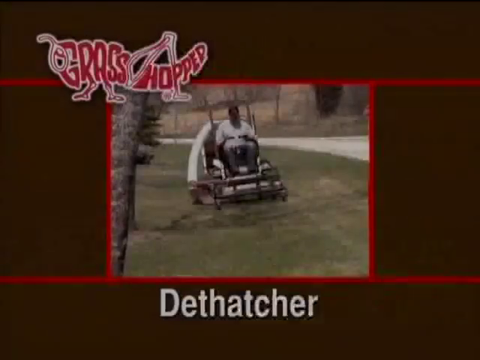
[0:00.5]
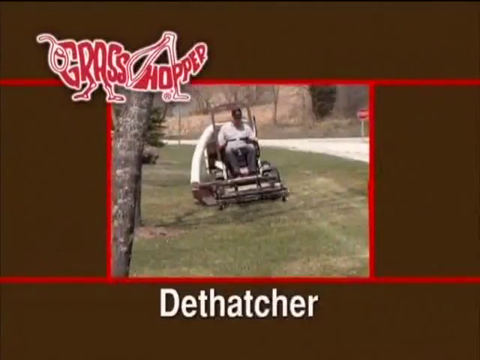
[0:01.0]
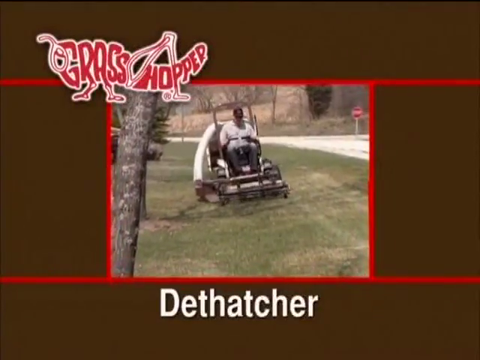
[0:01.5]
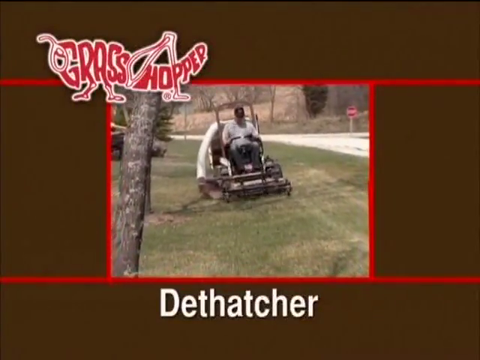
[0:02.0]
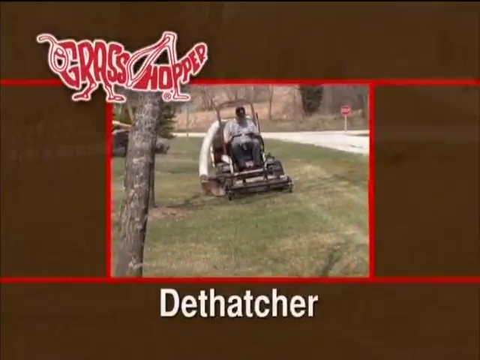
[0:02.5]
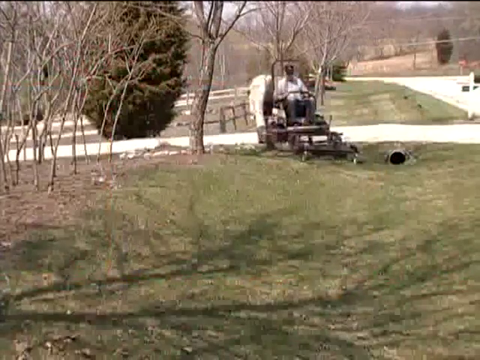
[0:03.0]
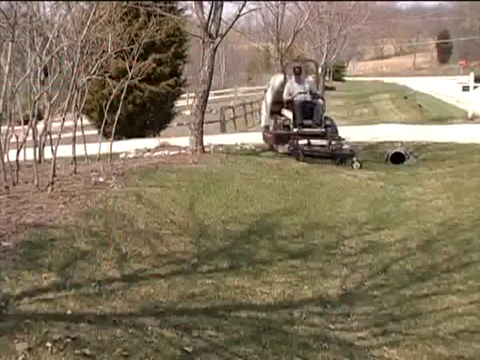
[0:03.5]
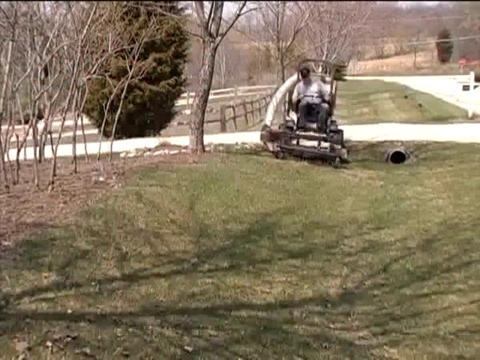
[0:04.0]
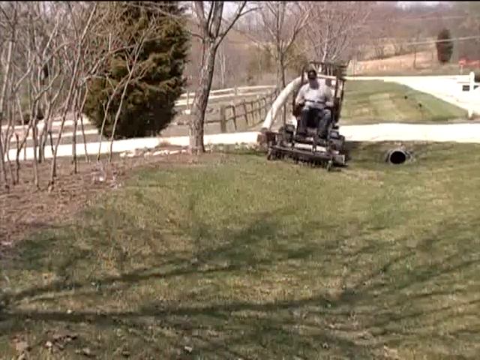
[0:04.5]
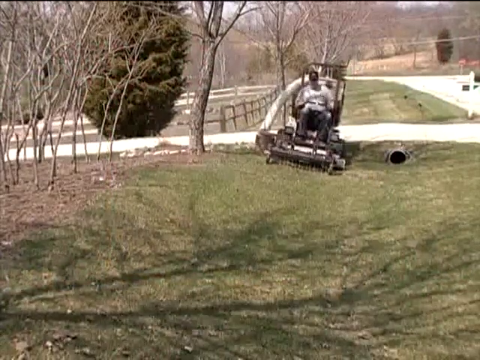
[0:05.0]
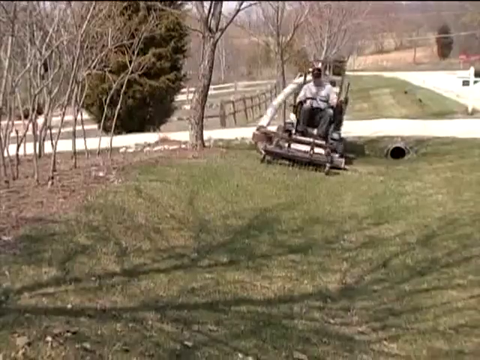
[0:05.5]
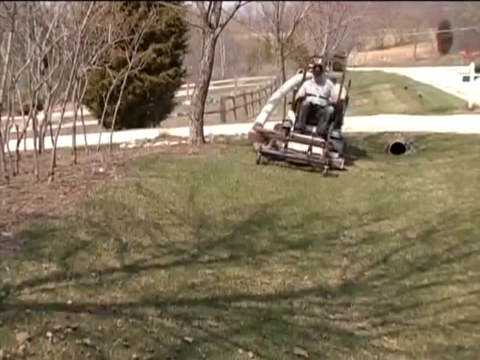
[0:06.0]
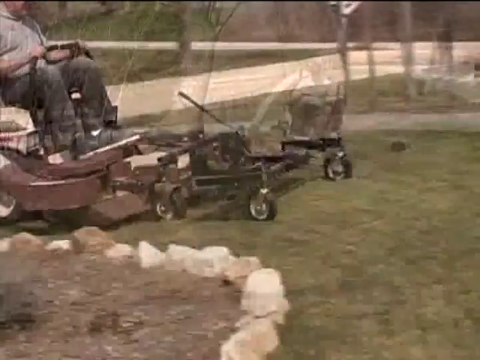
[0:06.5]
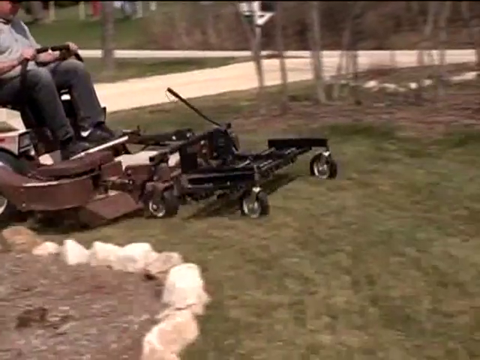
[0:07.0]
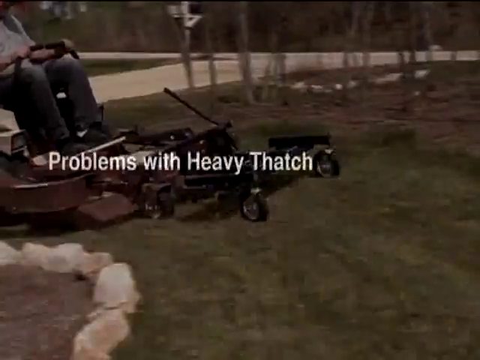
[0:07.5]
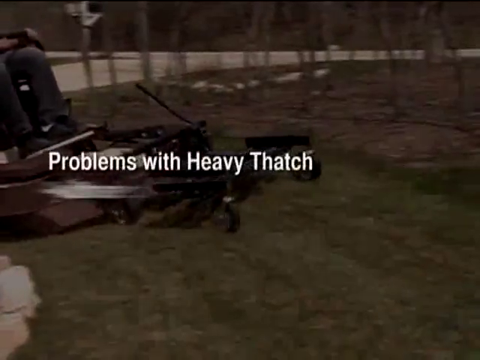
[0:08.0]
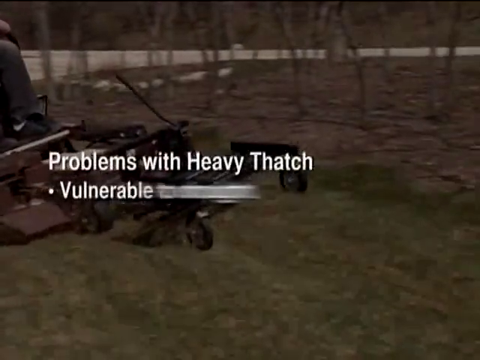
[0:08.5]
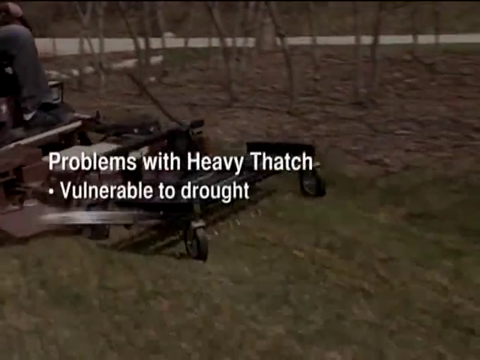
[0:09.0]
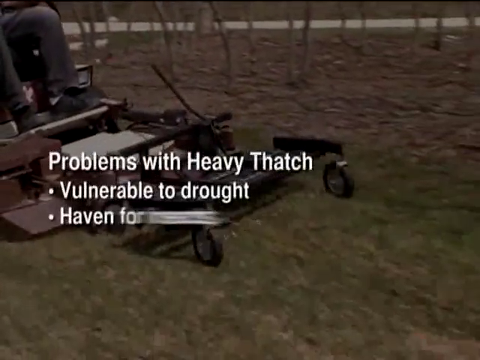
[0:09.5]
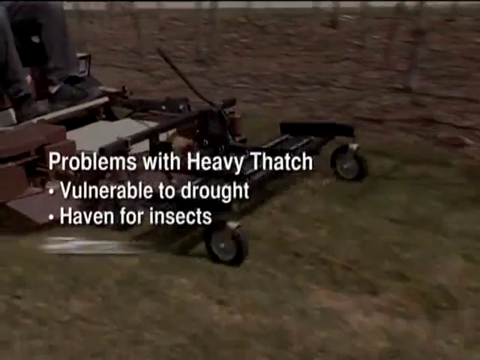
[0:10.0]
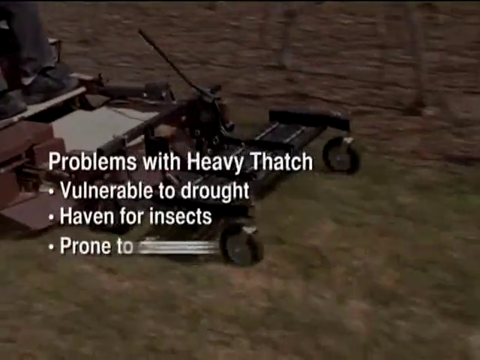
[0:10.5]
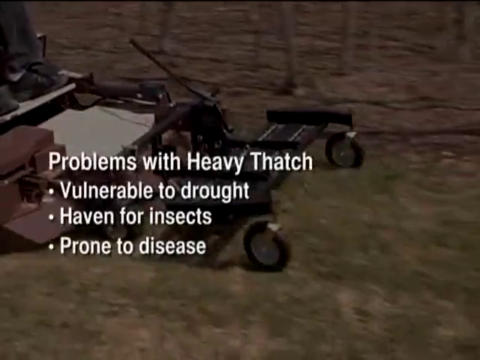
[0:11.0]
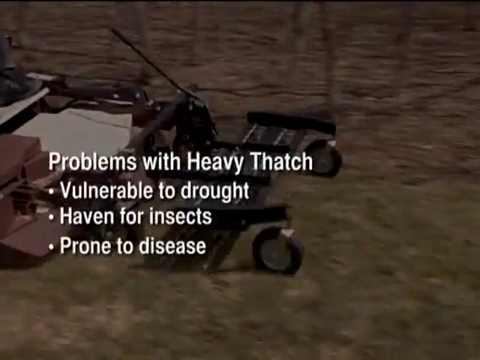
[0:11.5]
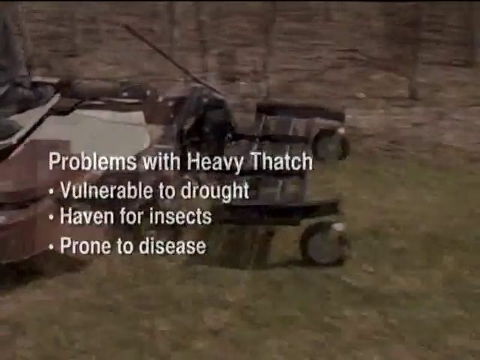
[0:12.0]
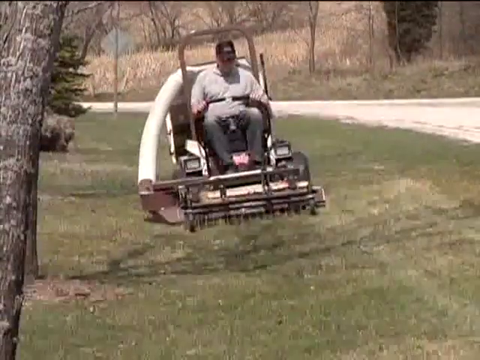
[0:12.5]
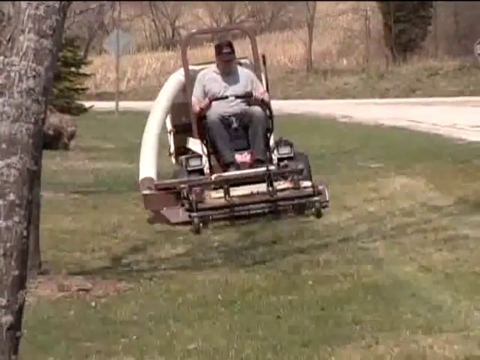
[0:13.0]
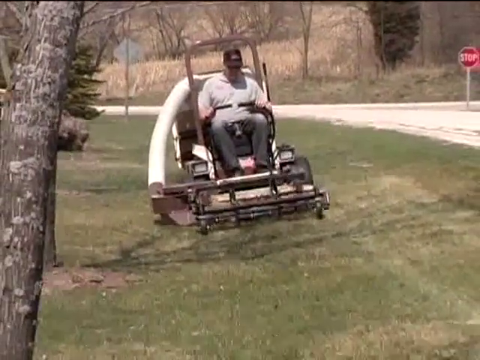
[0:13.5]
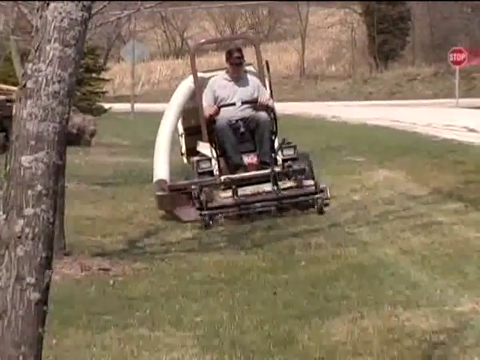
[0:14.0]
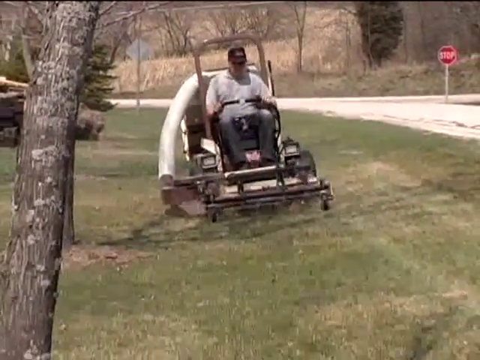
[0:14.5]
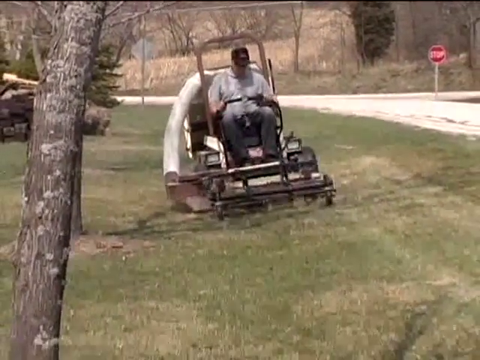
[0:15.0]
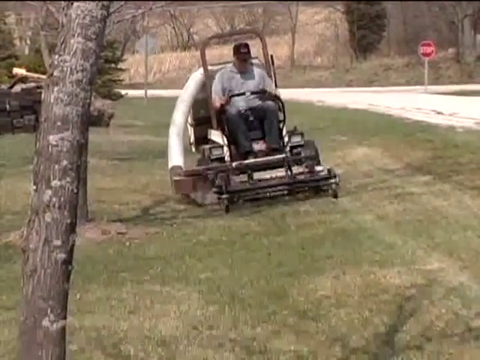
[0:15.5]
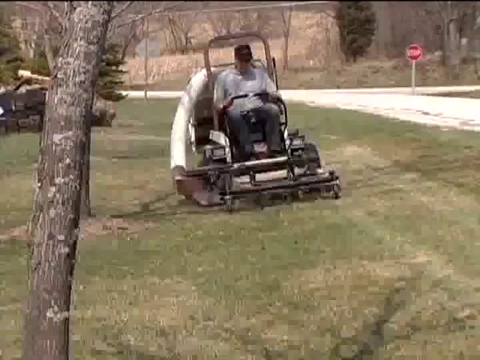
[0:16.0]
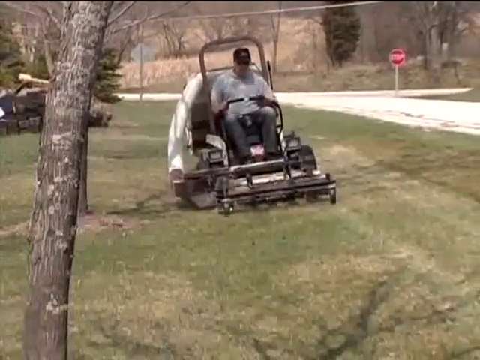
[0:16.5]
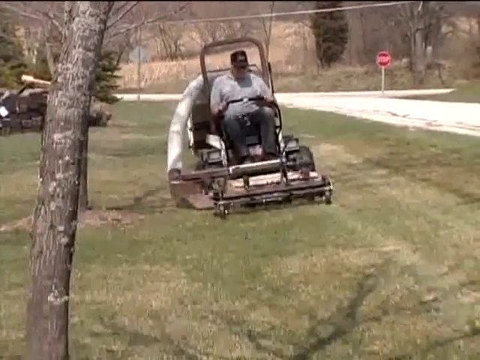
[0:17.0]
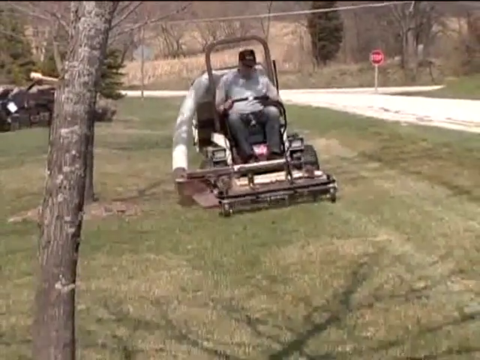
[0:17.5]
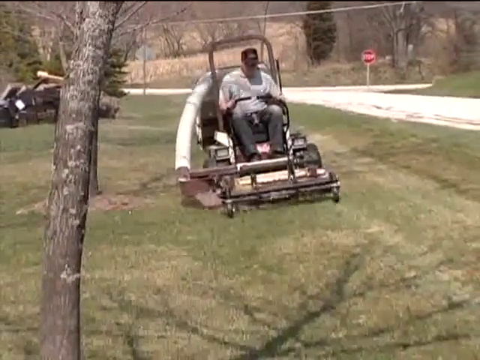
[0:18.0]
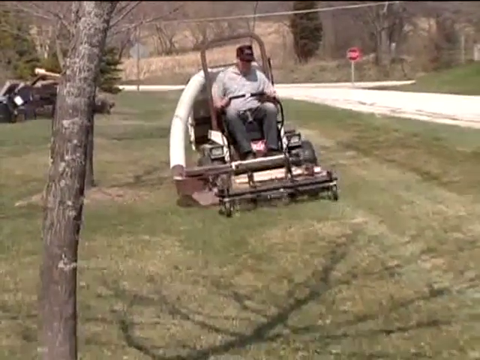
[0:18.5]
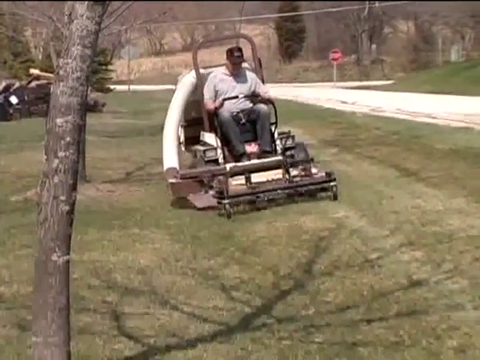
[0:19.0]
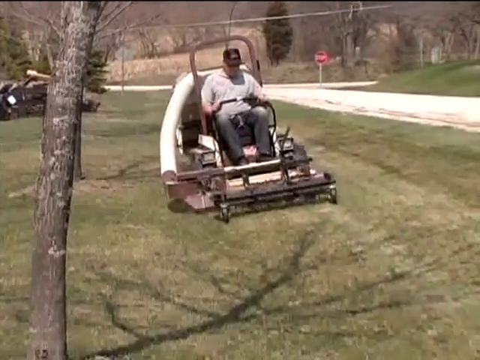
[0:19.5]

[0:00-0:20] Red text in the top left reads "Grasshopper"; its design includes a drawing shaped like a grasshopper, with the text forming the body of the grasshopper, which faces left. Below it, text reads "Dethatcher". In the middle, a person rides a lawn mowing machine, a vehicle used to mow the lawn; the video is low quality. Text reads "Problems with heavy thatch, vulnerable to drought, heaven for insects, prone to disease". The machine has no steering wheel, but pedals and handlebars that control it. The mowing part is mounted on the front and has two black wheels, while the main body of the machine has thick wheels that are also black. On the right of the machine there is a white object, like a pipe, that apparently collects the grass from the ground while the machine operates.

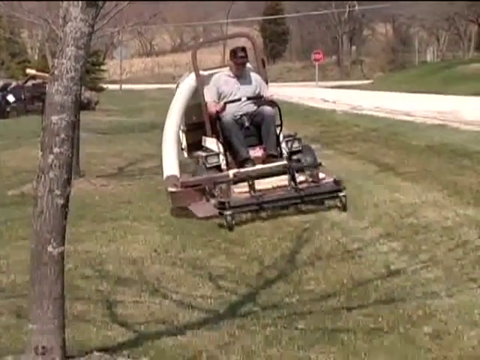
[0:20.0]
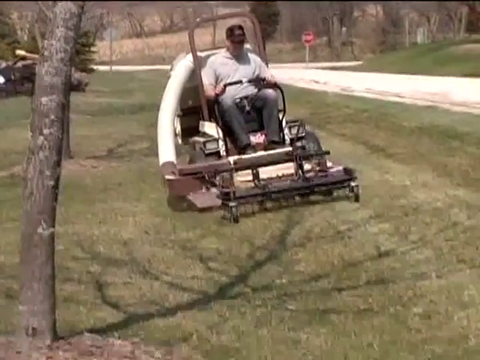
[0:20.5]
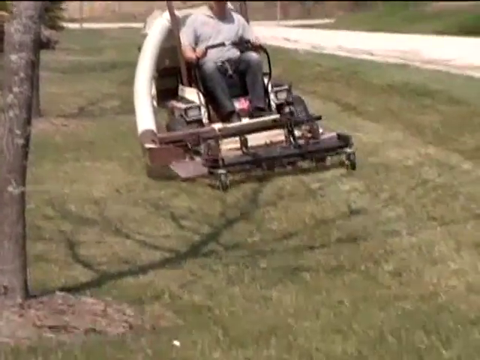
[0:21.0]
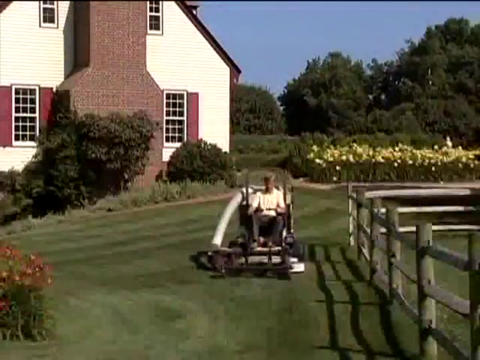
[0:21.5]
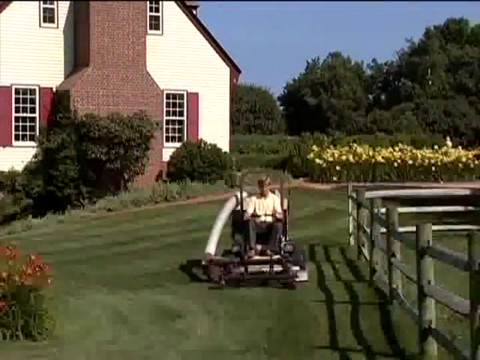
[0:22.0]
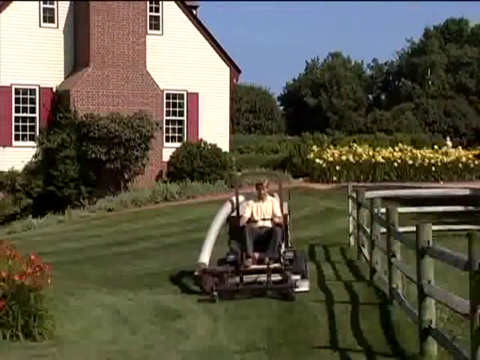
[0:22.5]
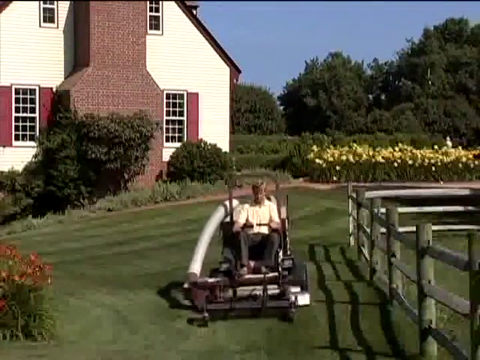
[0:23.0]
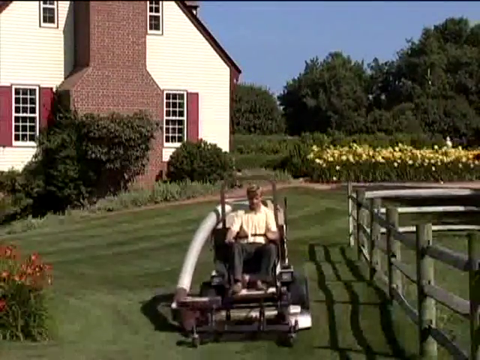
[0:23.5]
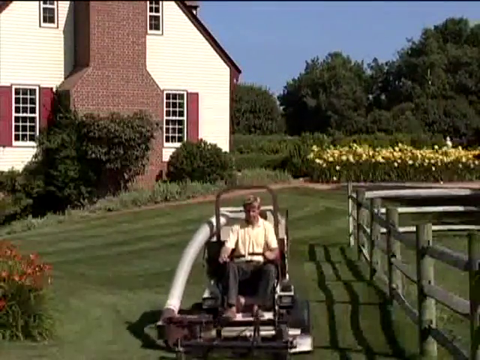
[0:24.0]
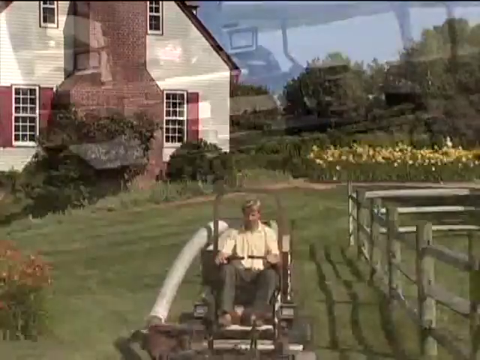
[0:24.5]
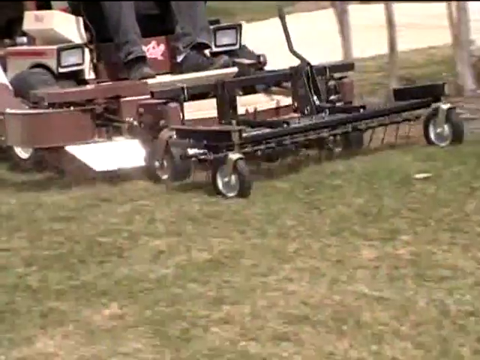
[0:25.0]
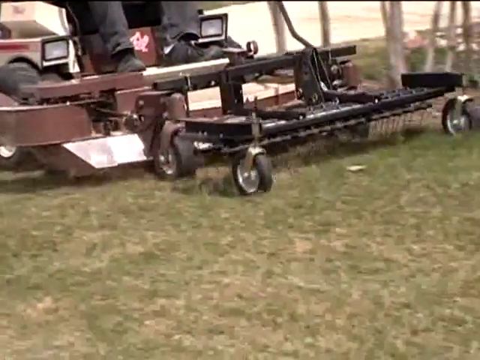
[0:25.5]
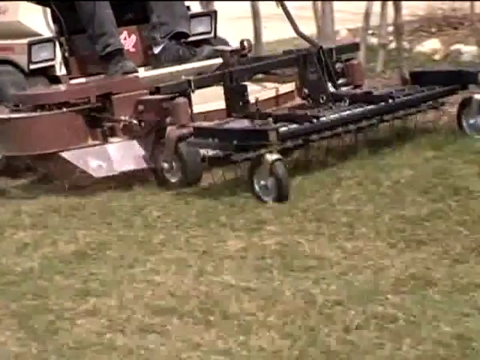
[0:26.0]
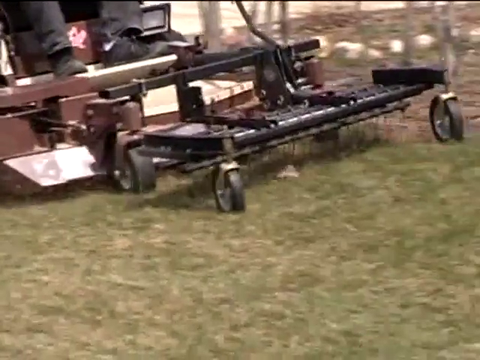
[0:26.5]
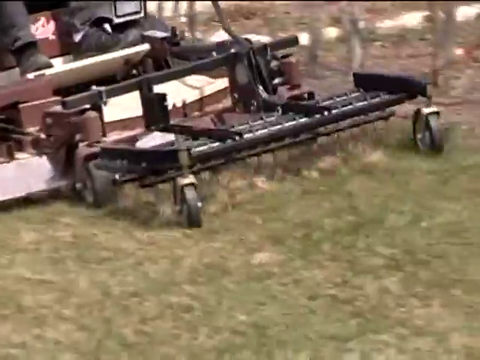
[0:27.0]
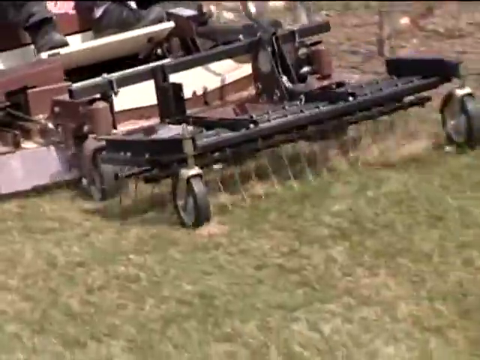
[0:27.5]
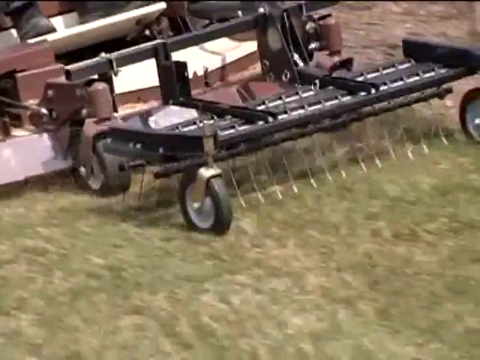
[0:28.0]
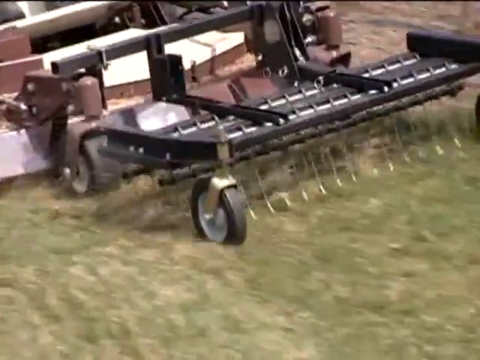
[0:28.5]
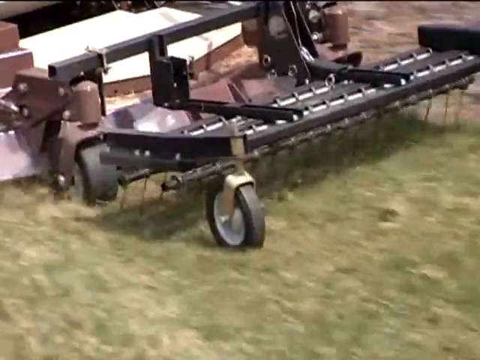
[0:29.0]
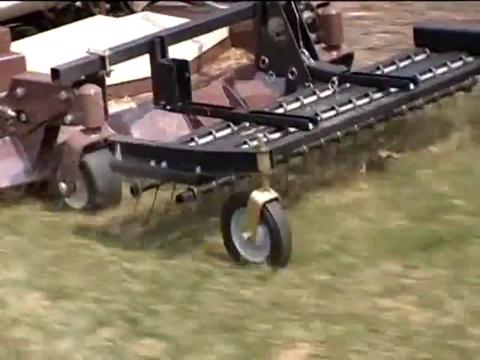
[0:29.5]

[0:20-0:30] A man wearing a brown cap, a grey t-shirt and black trousers rides the machine, mowing on a paved area. A different person is also seen mowing. On the left there is some sort of church, white and brown. Sunflowers are planted on the right, and there is a wooden fence to the right of where the person is mowing.